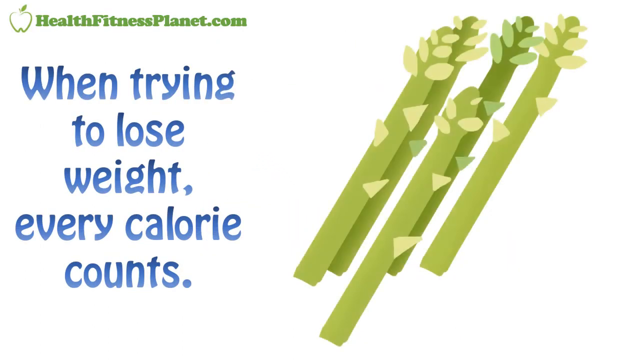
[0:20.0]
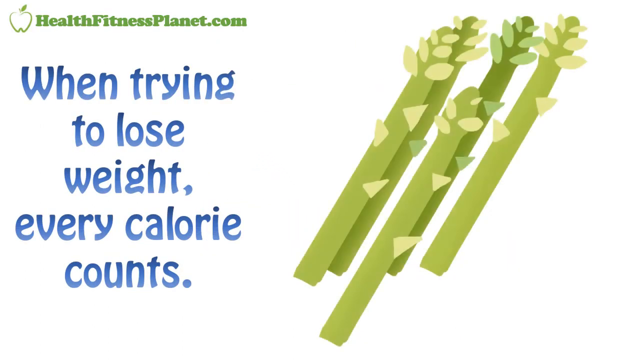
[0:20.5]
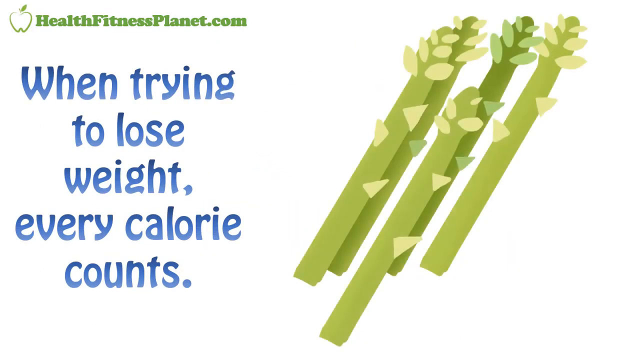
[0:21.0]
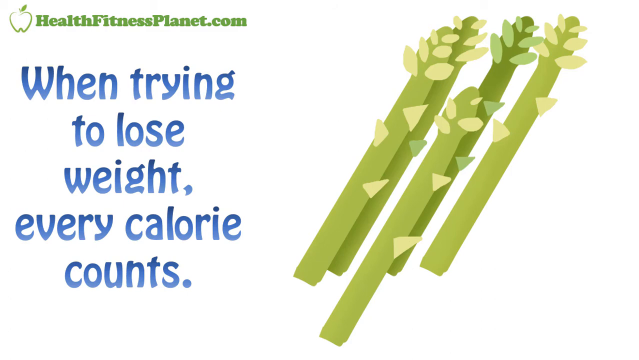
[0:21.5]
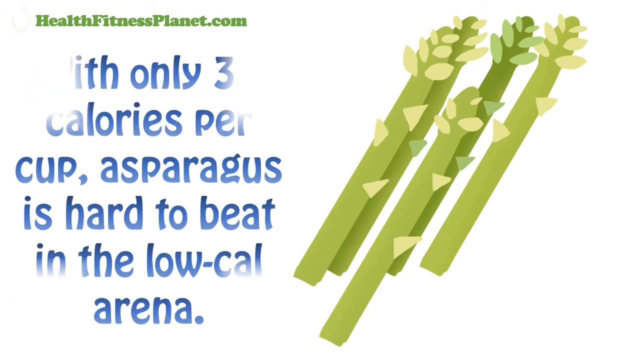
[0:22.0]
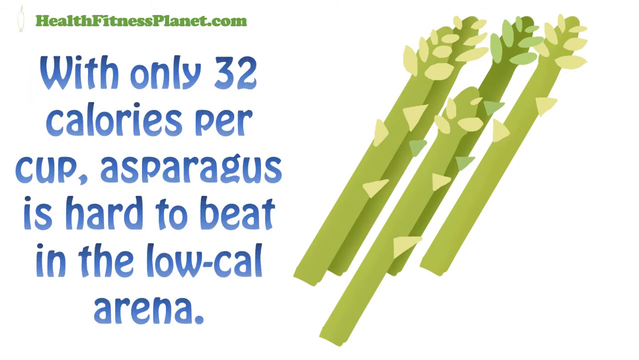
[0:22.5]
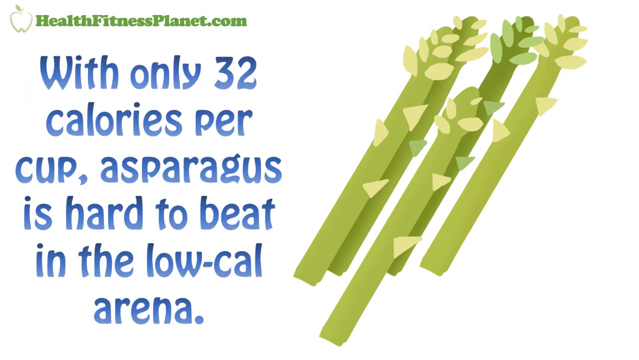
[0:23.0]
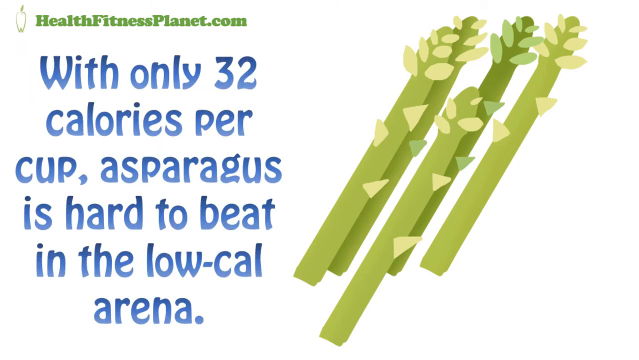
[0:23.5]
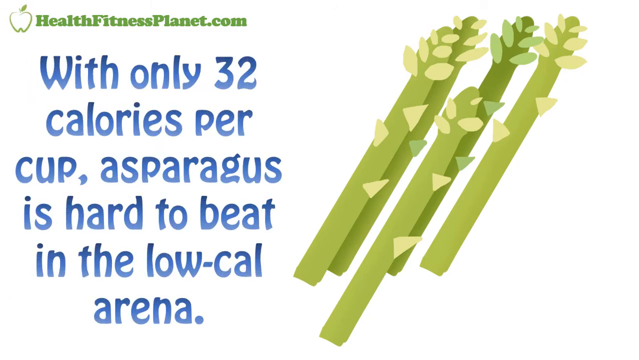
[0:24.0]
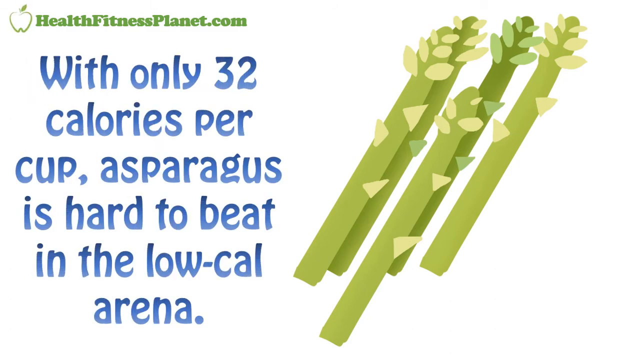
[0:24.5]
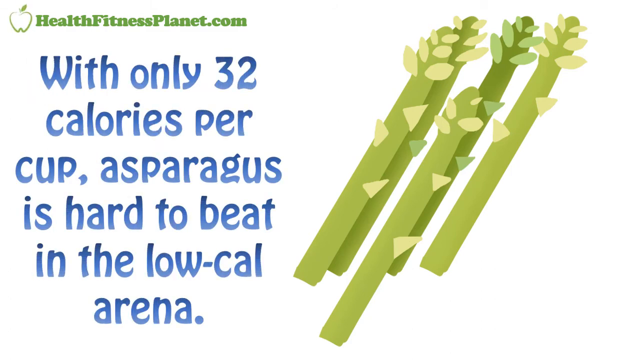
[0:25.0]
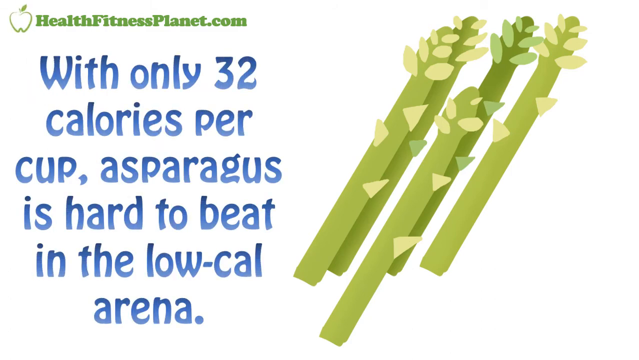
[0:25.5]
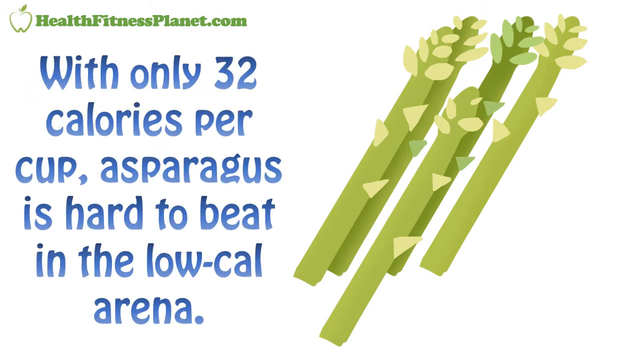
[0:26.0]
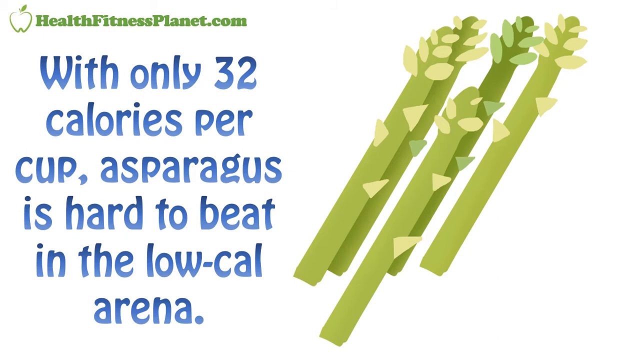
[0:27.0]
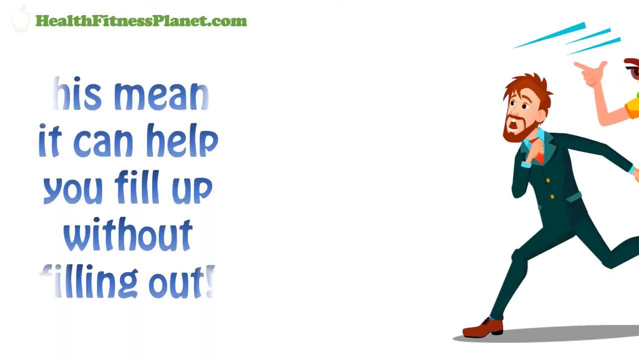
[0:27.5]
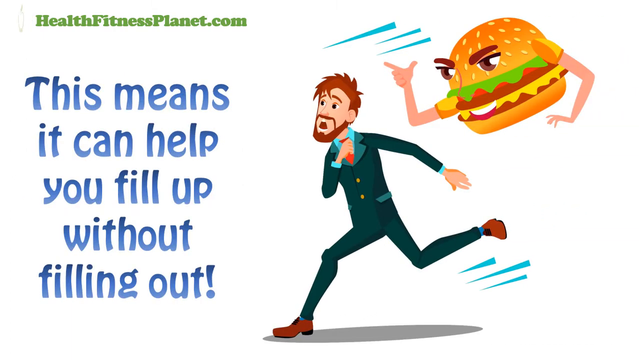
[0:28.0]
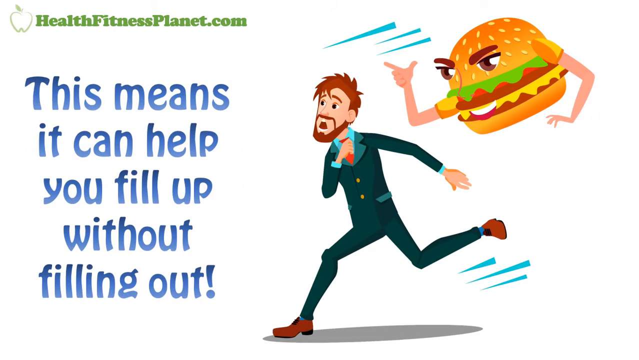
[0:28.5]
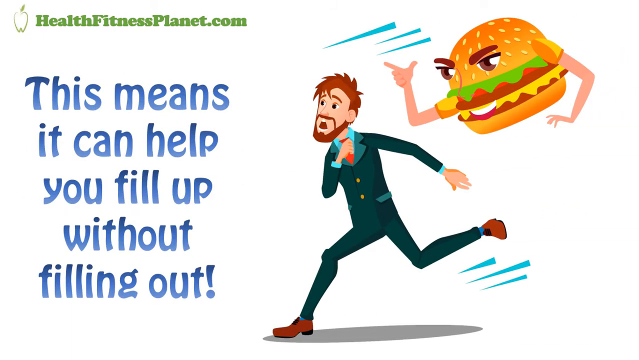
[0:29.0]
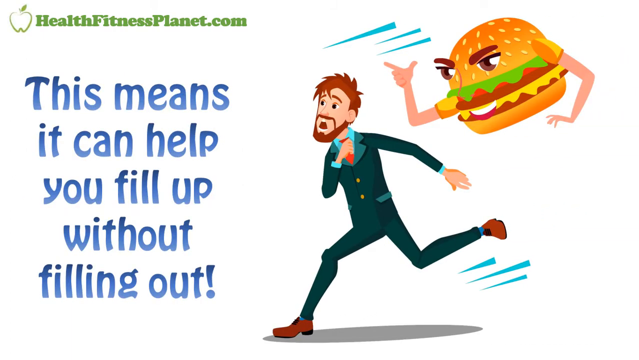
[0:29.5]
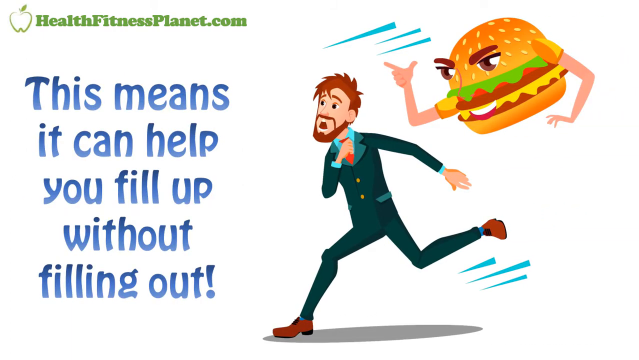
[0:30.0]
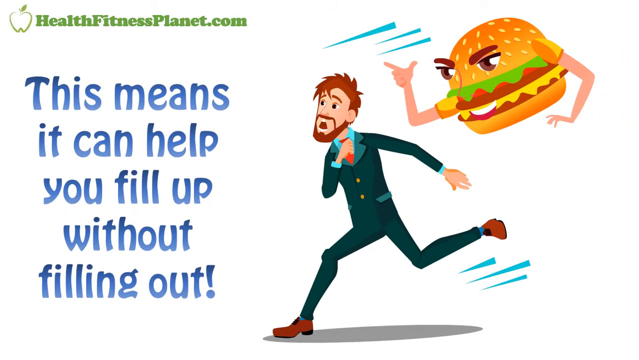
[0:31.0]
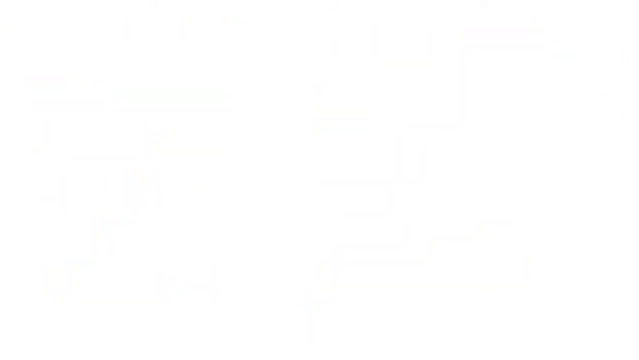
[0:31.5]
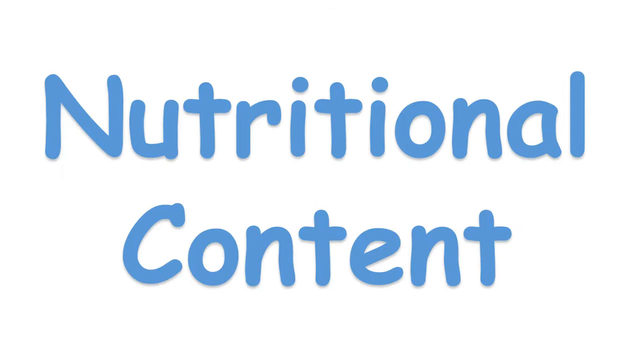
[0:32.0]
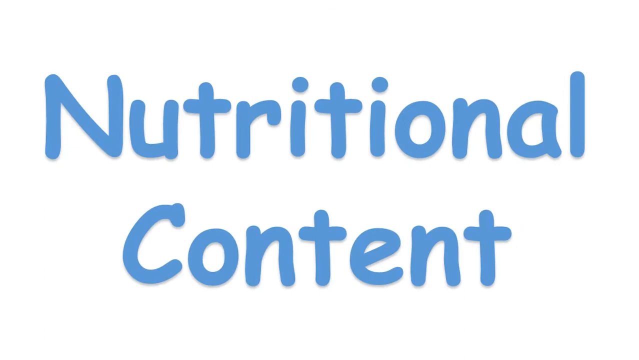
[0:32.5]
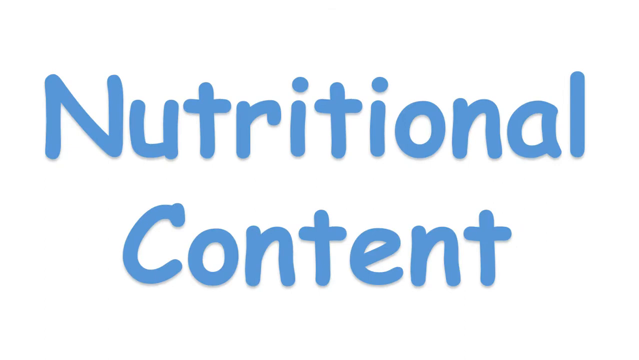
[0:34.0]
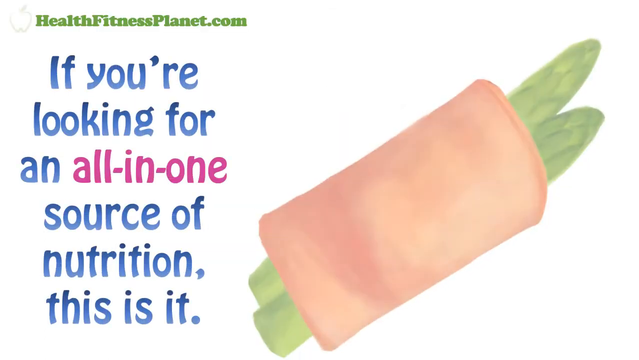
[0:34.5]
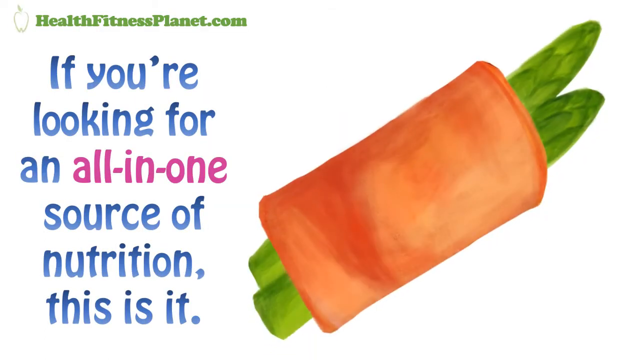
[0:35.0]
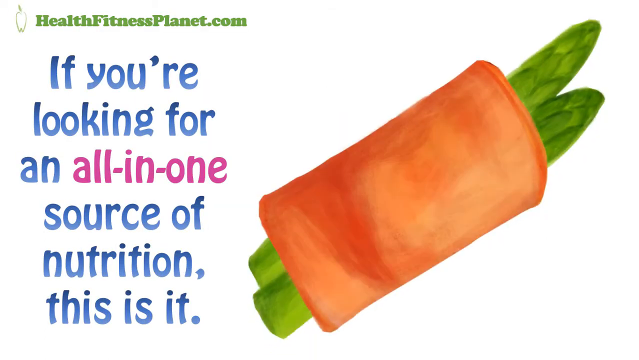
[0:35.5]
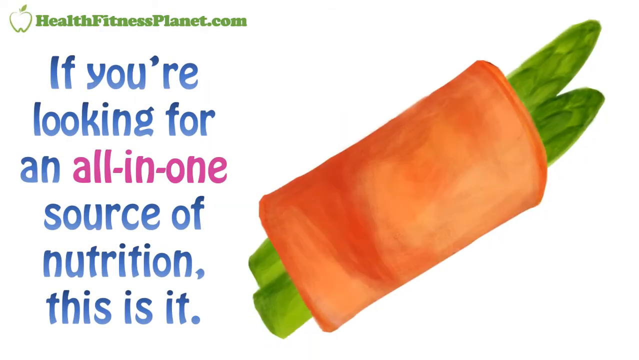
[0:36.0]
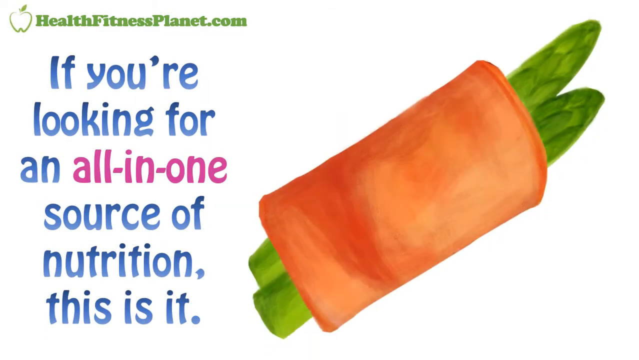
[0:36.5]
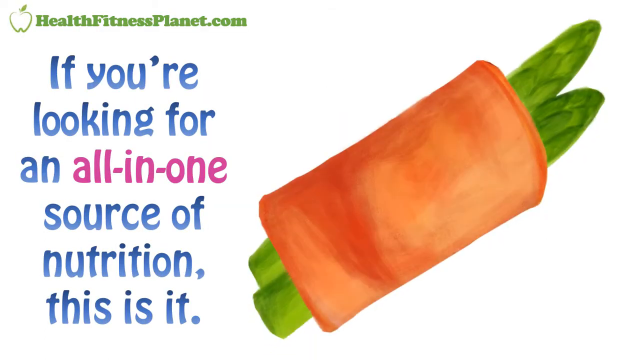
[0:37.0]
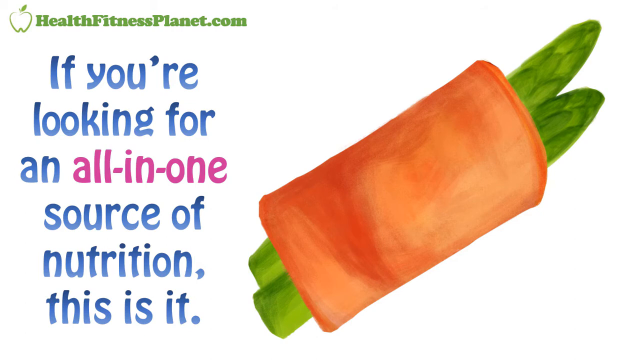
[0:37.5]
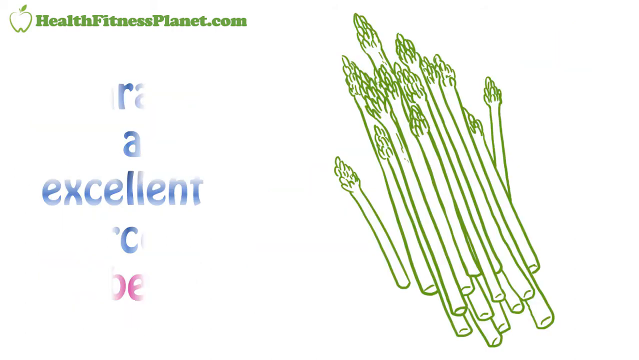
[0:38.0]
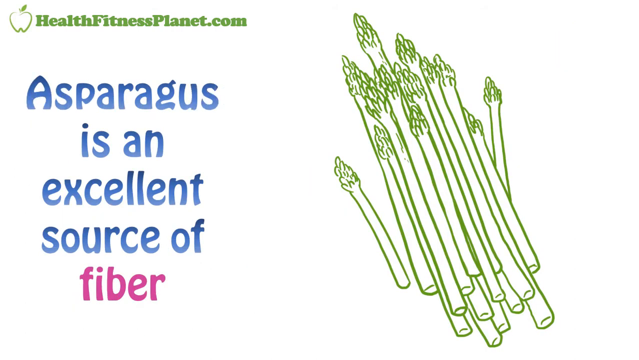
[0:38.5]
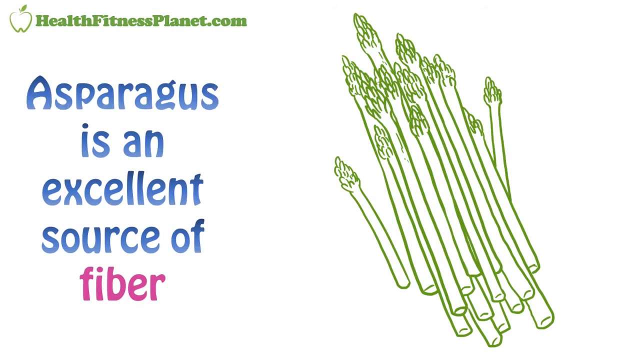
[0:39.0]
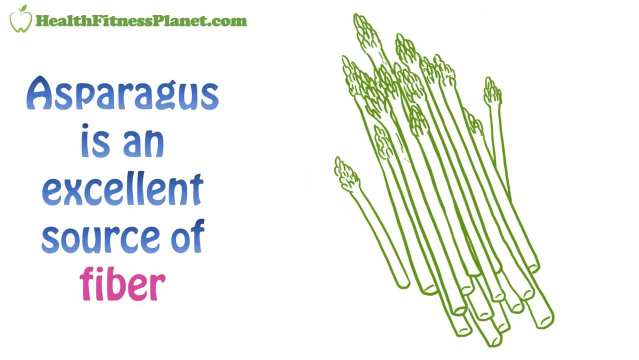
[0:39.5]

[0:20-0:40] An illustration of five asparagus spears is on the right side. On the left, at the top, green text reads "healthfitnessplanet.com" with a simple outline drawing of an apple, and below it blue text says "when trying to lose weight every calorie counts." The text on the left changes, and the blue text reads "with only 32 calories per cup asparagus is hard to beat in the low calorie arena," which stays on screen for a moment. The whole screen then changes: on the right, a cartoon man with red hair, a red mustache, and a beard runs away toward the left, chased by a flying hamburger with two arms and evil-looking eyes and eyebrows. On the left, blue text says "this means it can help you fill up without filling out." Next, the words "nutritional content" appear in blue. An illustration on the right shows two asparagus spears wrapped in a slice of ham, and writing on the right side says "if you're looking for an all in one source of nutrition this is it," in blue except for "all in one," which is in red. The illustration then changes to another simple outline of a bunch of asparagus stalks on the right, and on the left blue text says "asparagus is an excellent source of fiber," with the word "fiber" in red.